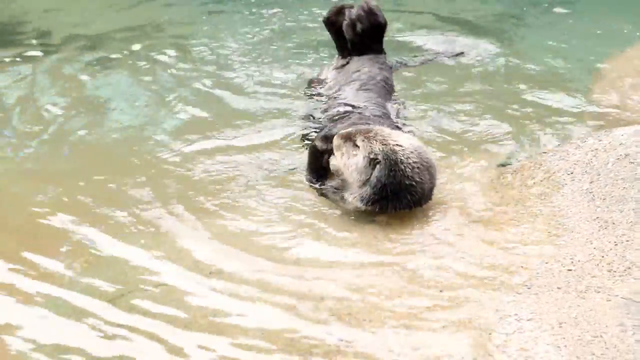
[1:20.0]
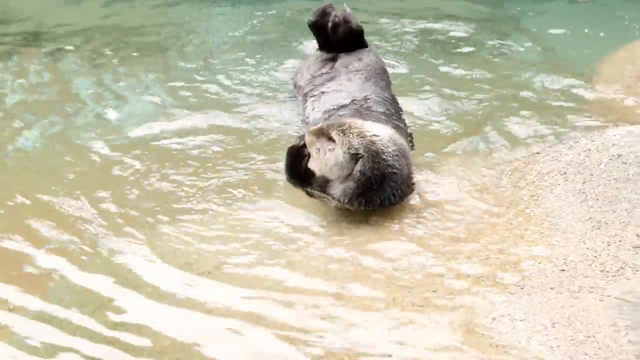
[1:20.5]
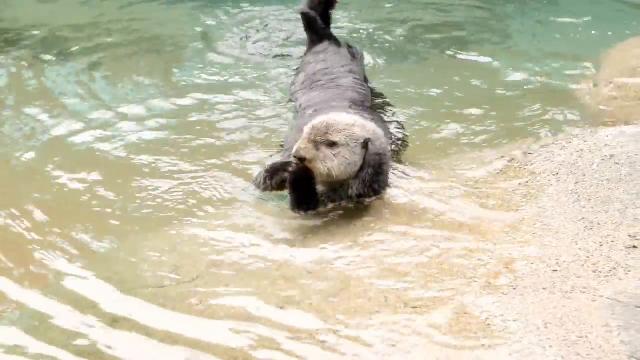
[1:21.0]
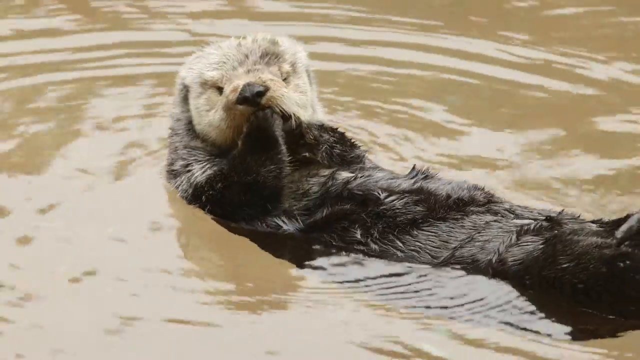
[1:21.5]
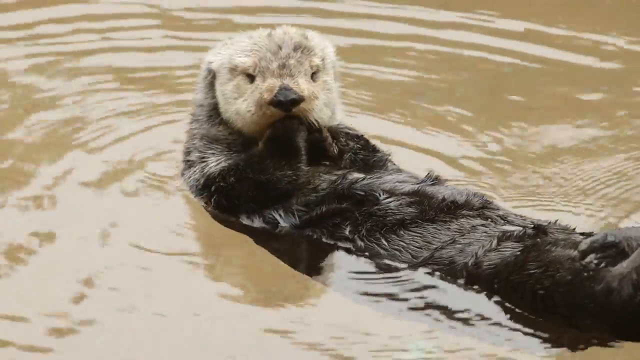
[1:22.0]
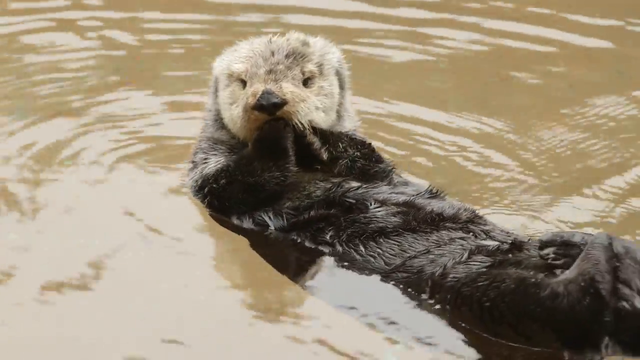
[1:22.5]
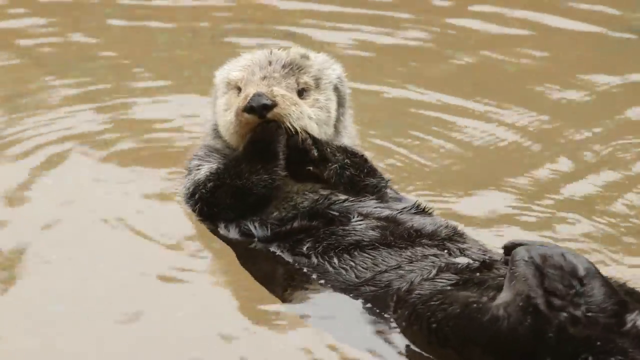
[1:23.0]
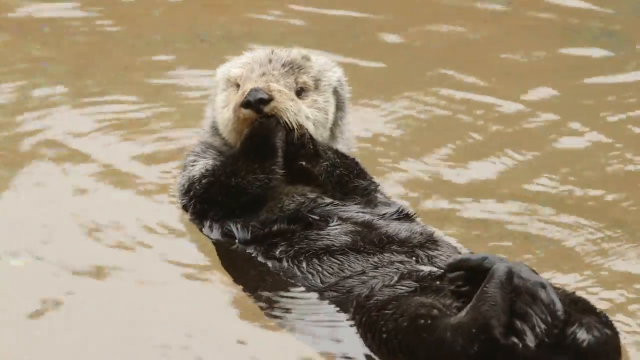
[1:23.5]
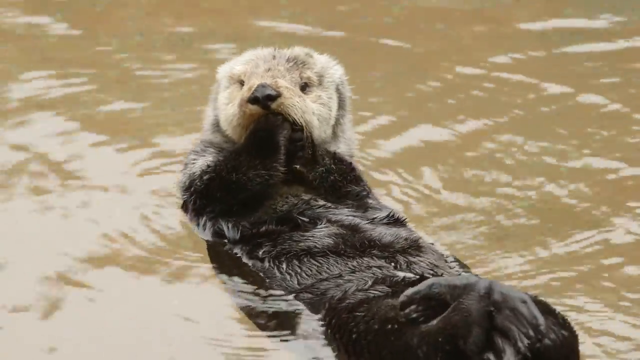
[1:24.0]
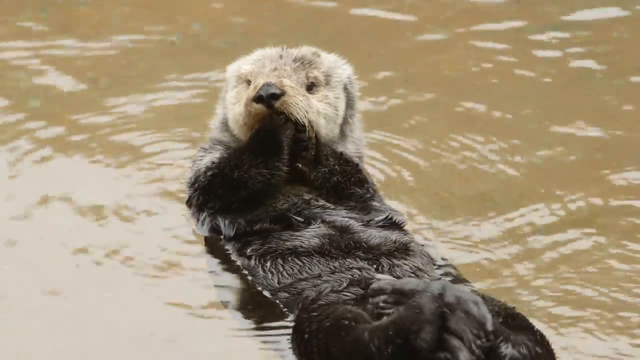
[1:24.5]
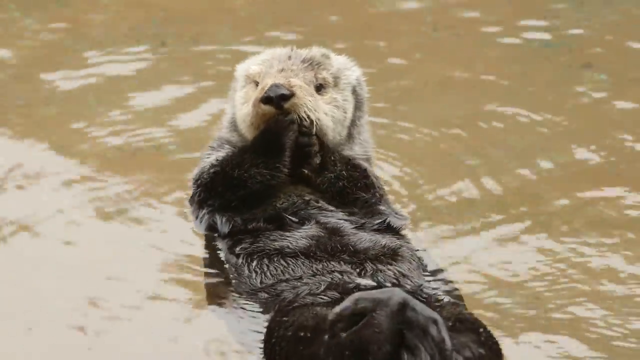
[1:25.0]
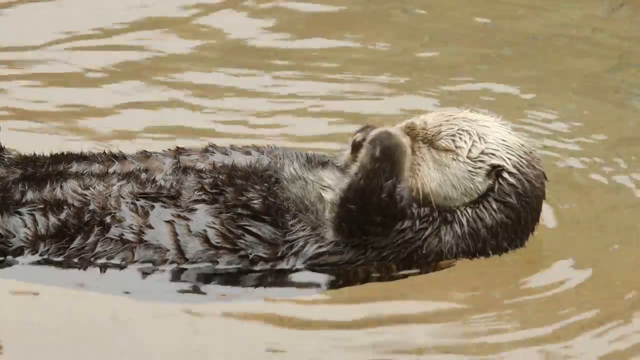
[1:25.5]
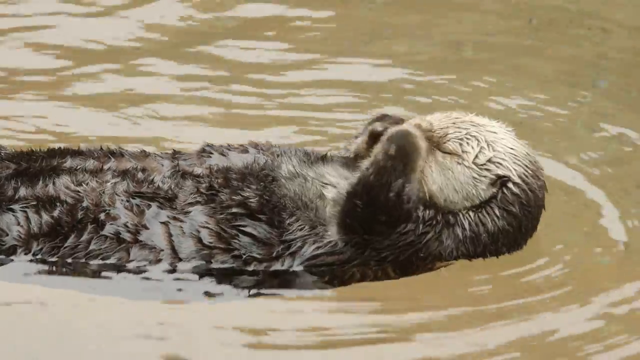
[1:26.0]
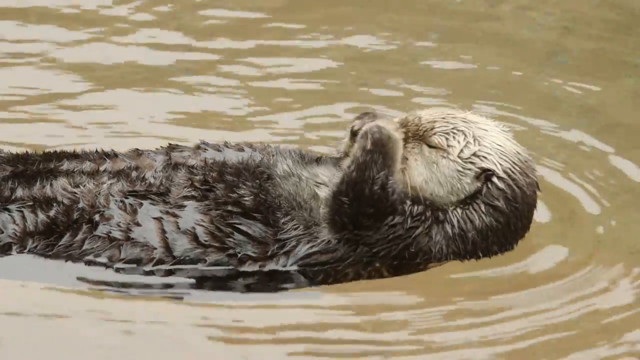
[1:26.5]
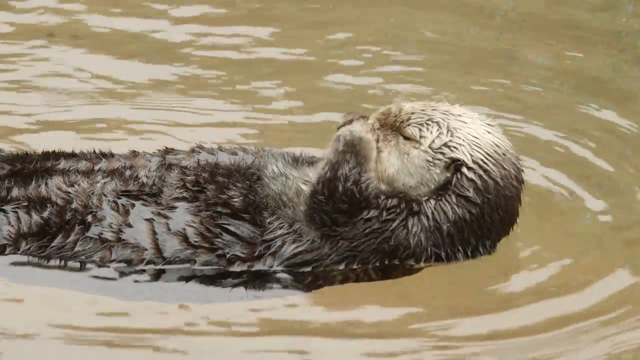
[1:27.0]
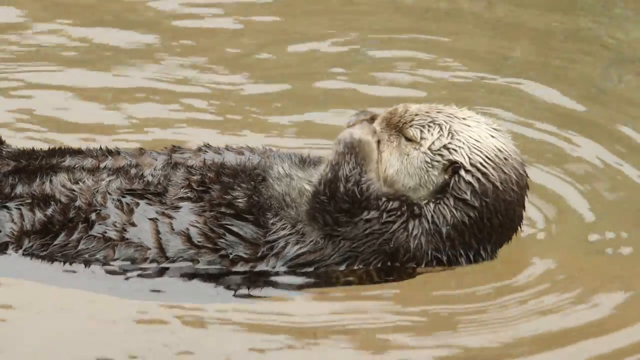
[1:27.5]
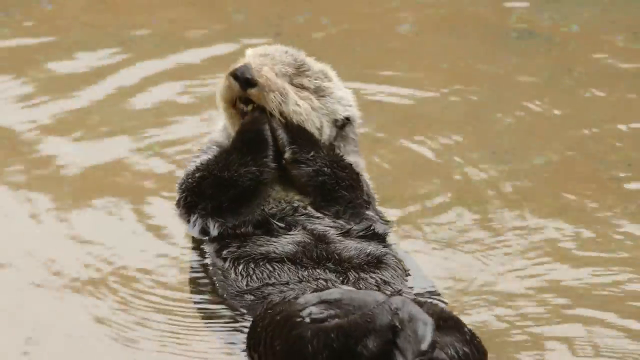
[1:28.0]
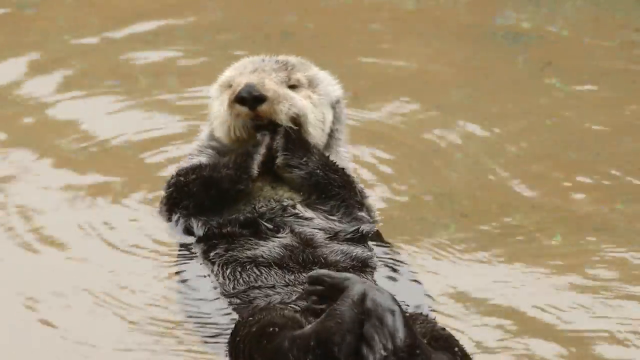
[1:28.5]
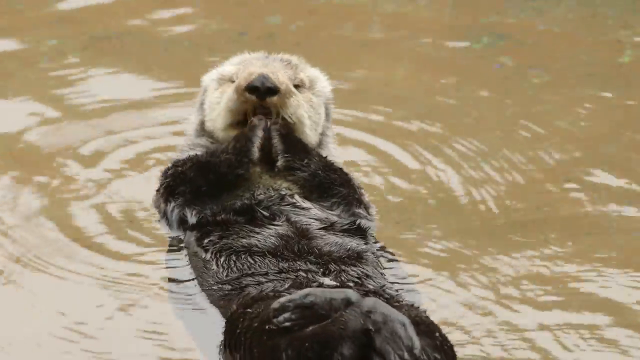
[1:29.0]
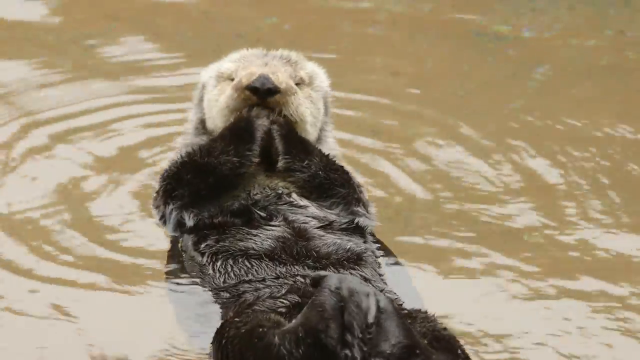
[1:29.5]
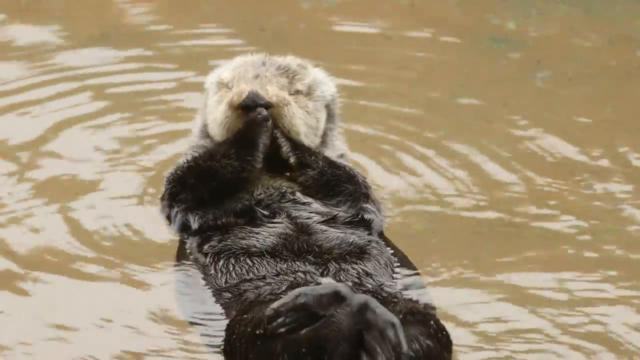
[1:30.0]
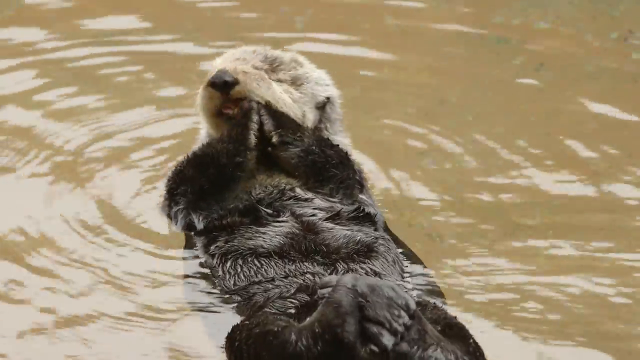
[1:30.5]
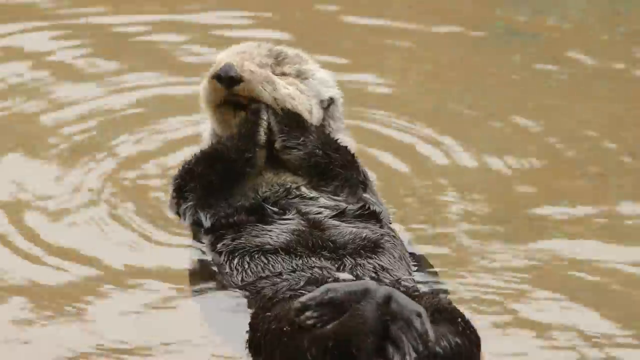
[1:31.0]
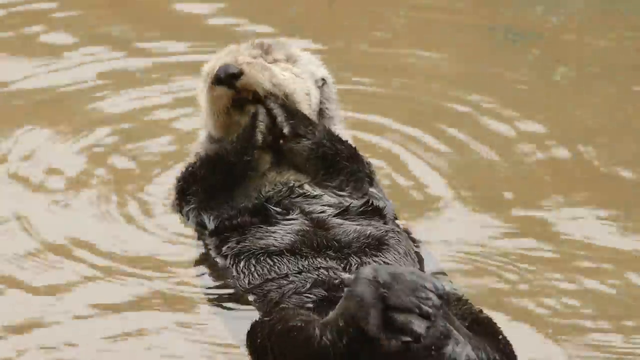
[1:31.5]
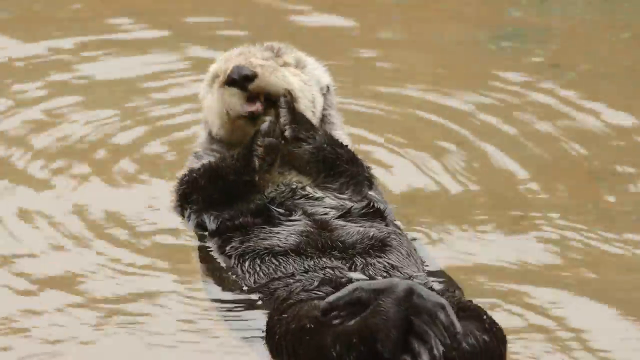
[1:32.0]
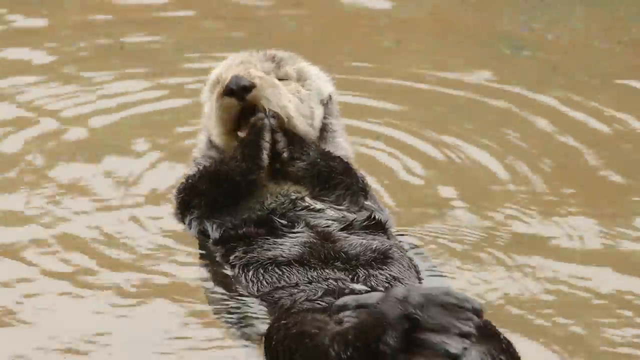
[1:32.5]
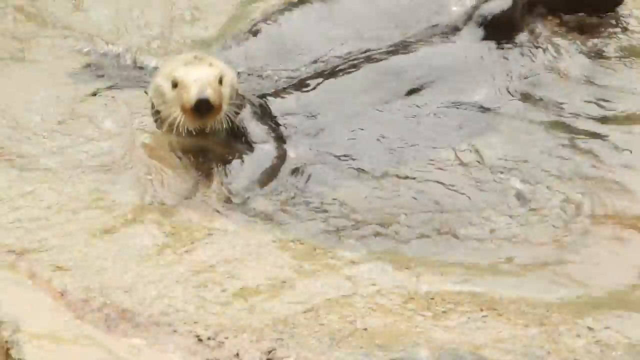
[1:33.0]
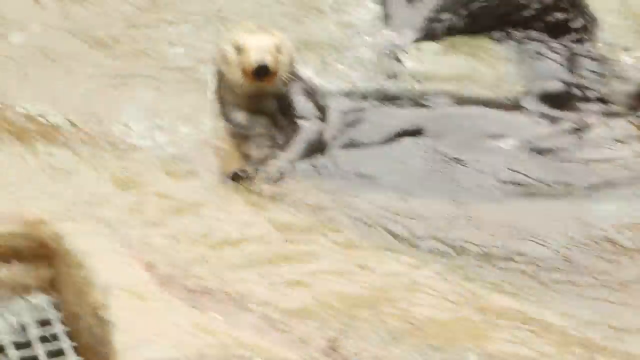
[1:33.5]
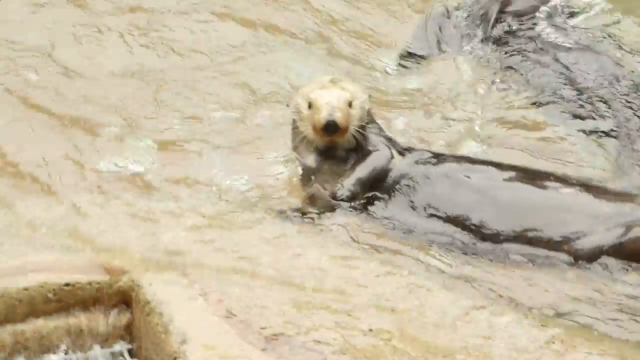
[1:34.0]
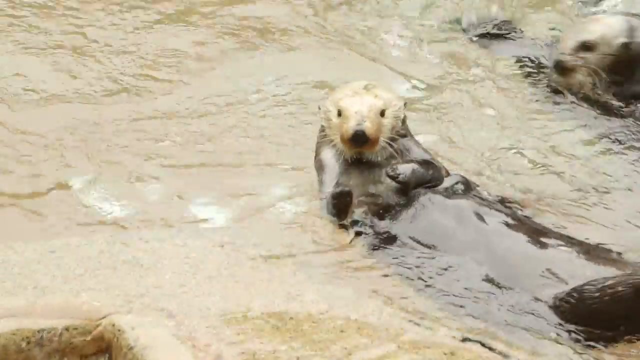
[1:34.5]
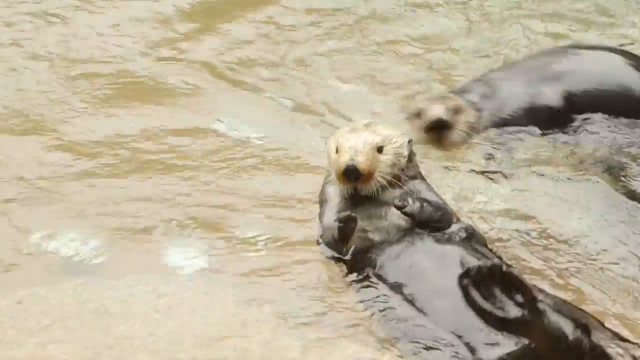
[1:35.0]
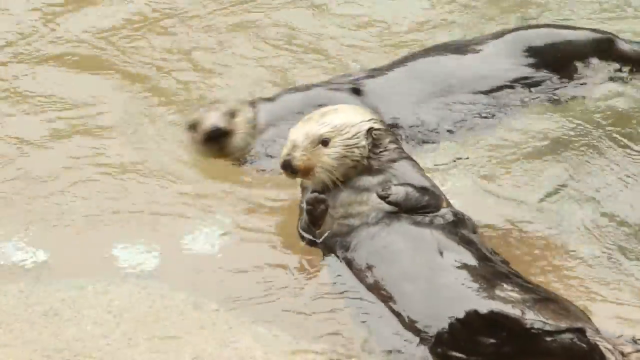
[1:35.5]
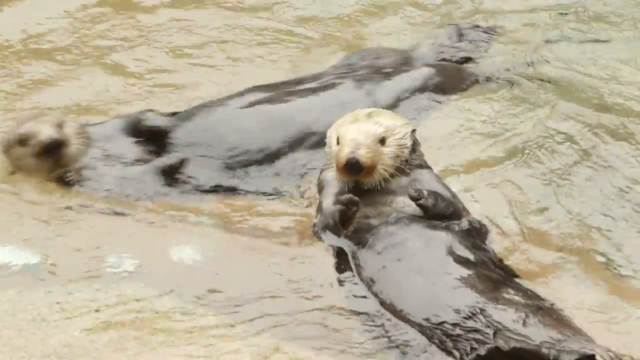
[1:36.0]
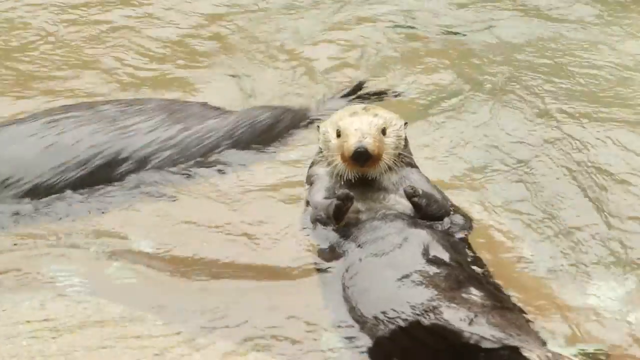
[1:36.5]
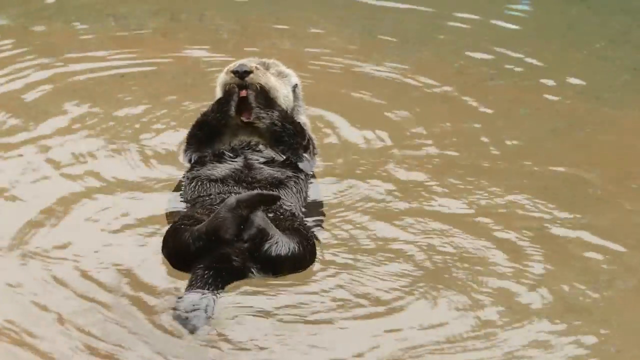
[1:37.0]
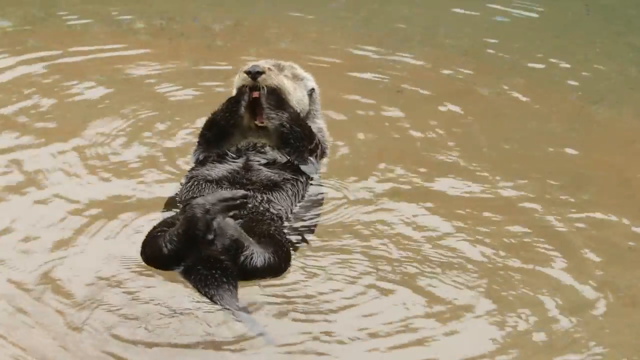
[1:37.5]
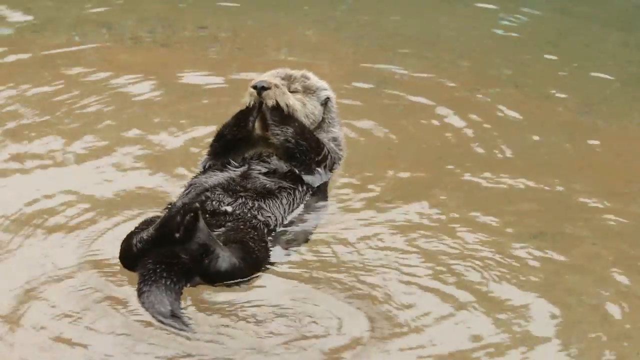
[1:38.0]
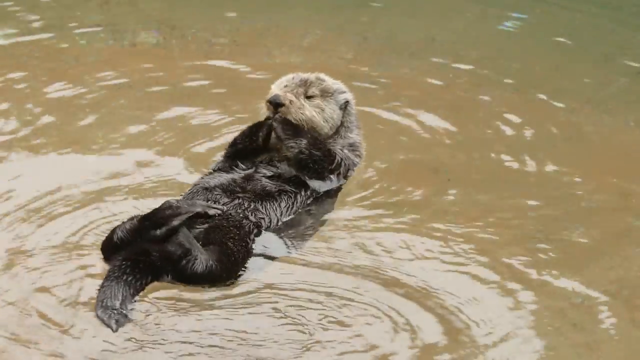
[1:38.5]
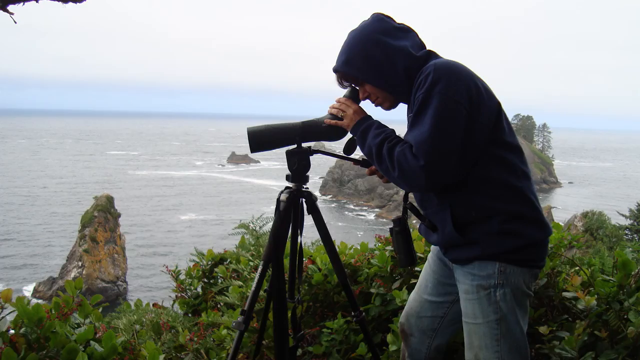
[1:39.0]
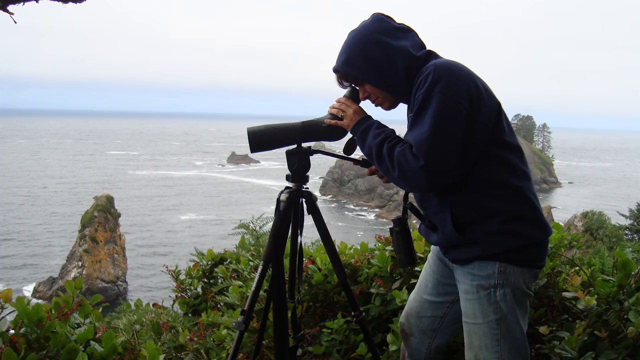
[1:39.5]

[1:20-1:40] The camera captures the otters floating in the water facing upward, some of them putting their hands and legs together. The water turns brown where the otters float in it, and other parts of the water turn brown as well. The otters chew, eating and playing with their legs and hands.